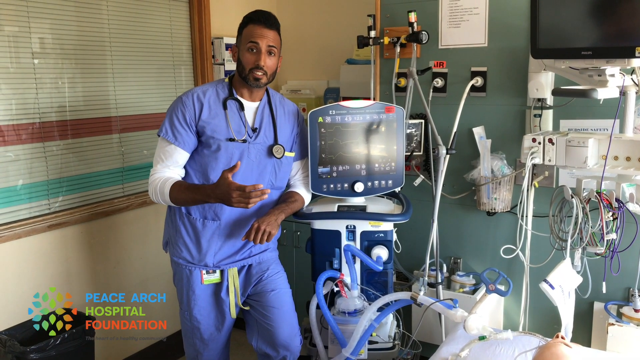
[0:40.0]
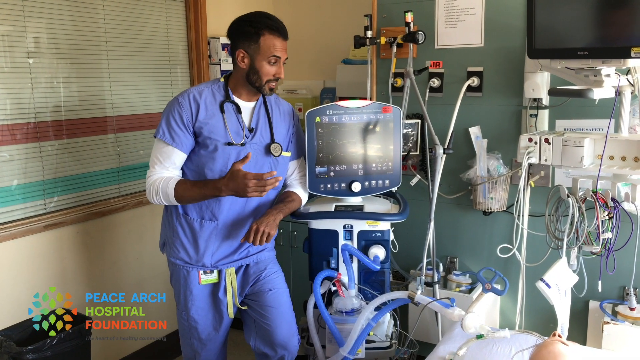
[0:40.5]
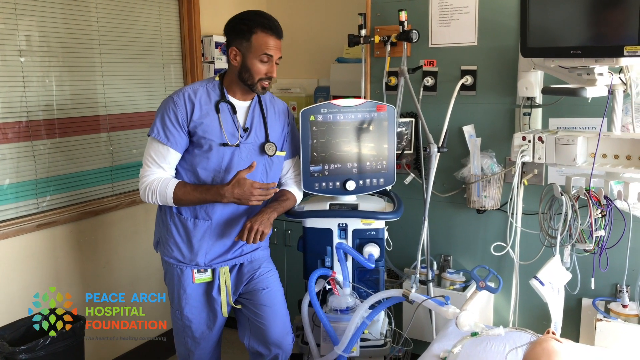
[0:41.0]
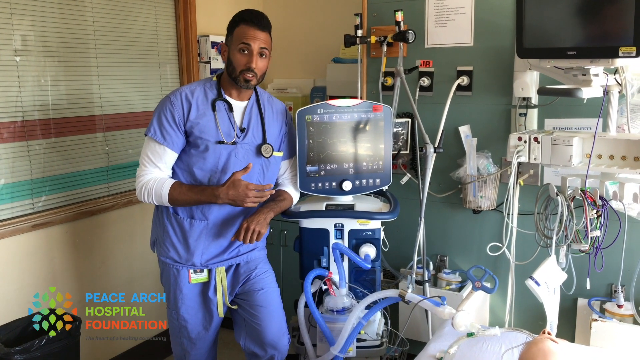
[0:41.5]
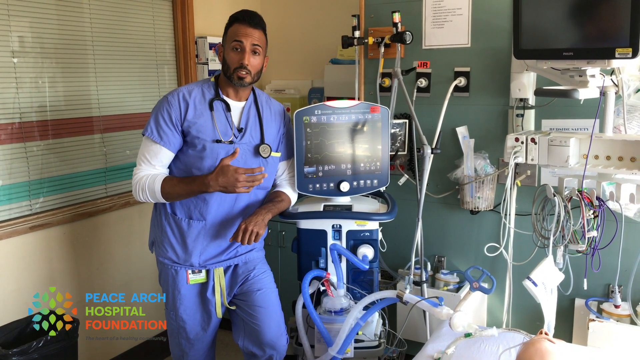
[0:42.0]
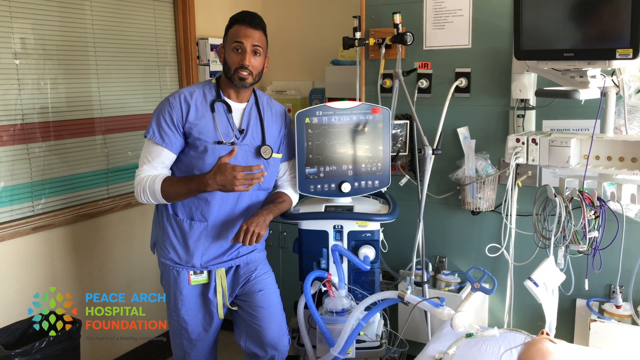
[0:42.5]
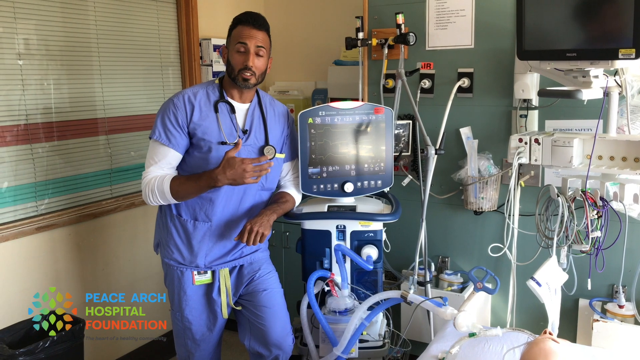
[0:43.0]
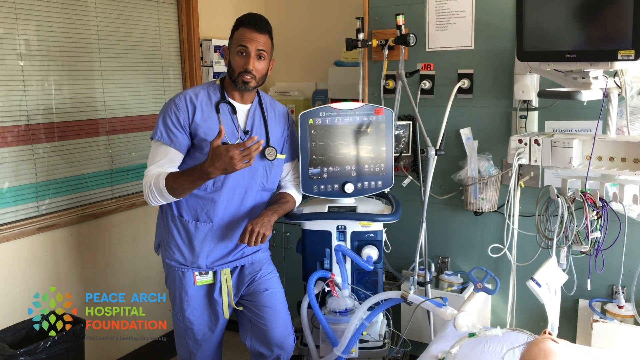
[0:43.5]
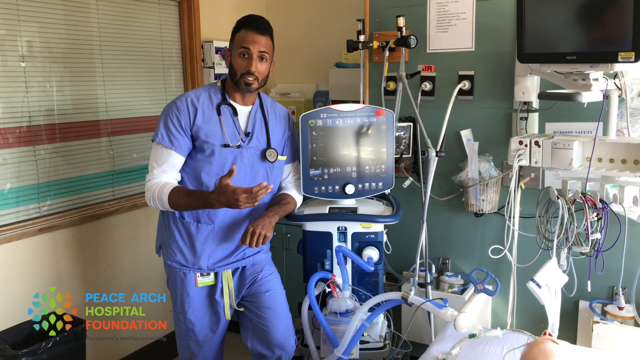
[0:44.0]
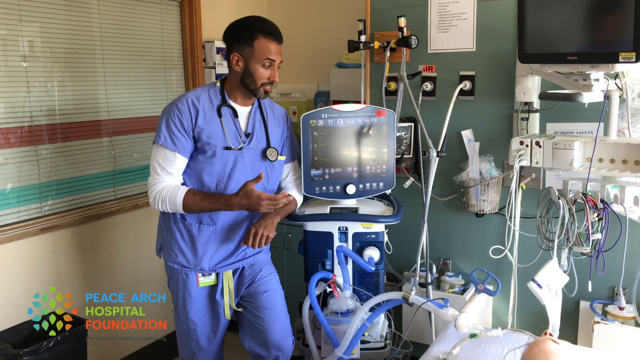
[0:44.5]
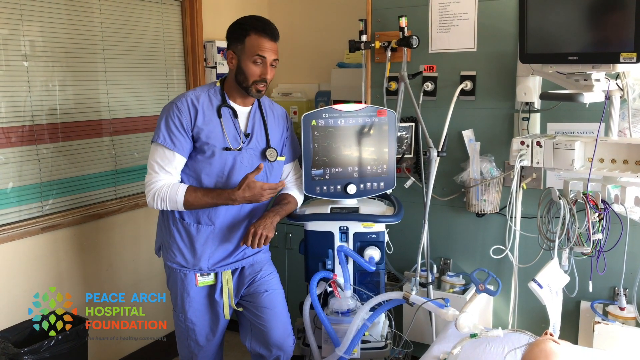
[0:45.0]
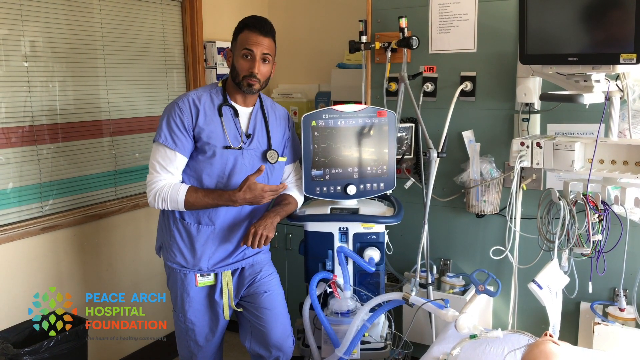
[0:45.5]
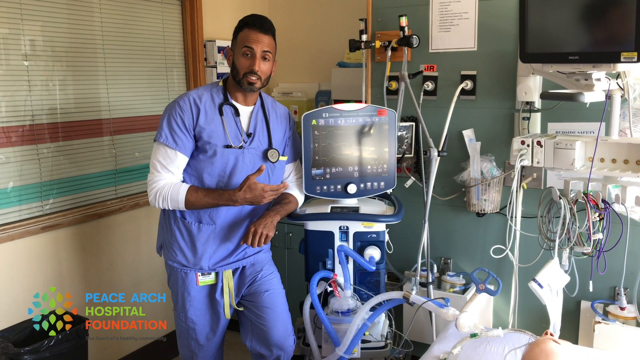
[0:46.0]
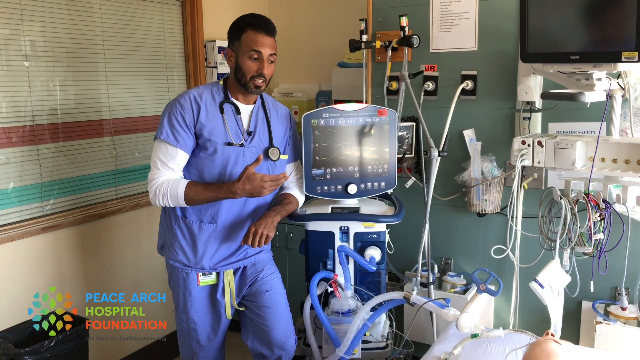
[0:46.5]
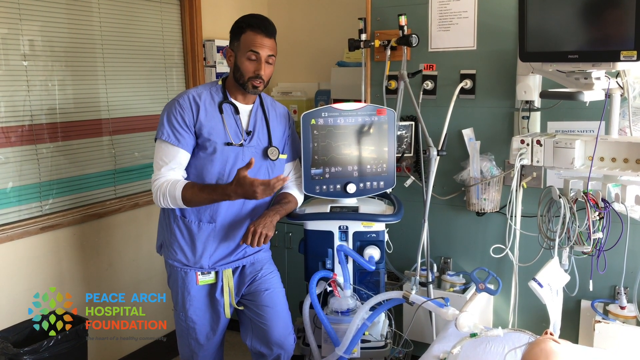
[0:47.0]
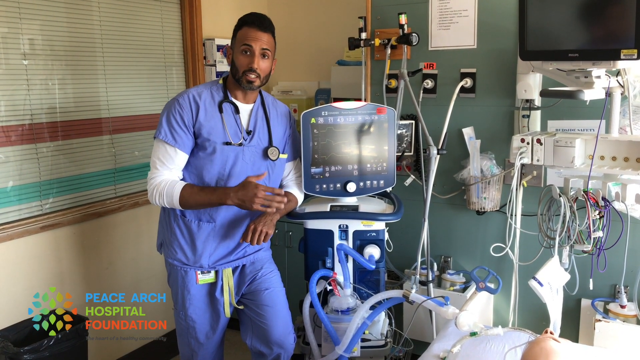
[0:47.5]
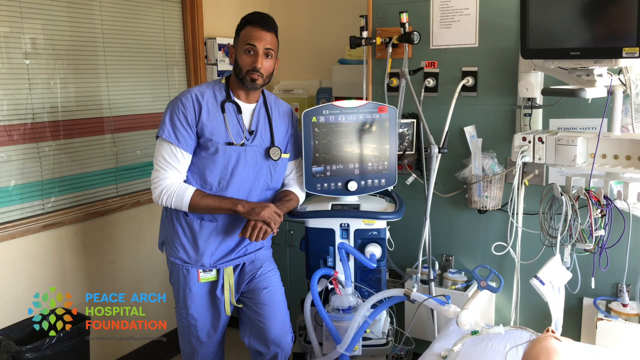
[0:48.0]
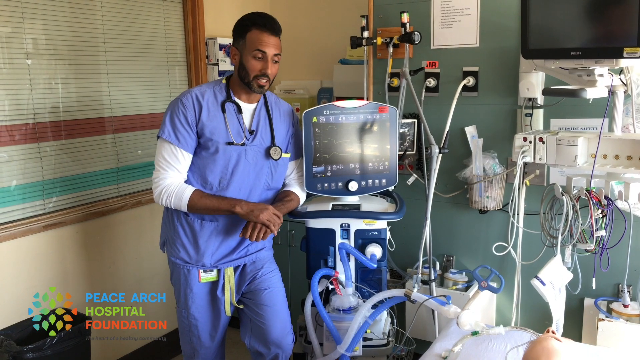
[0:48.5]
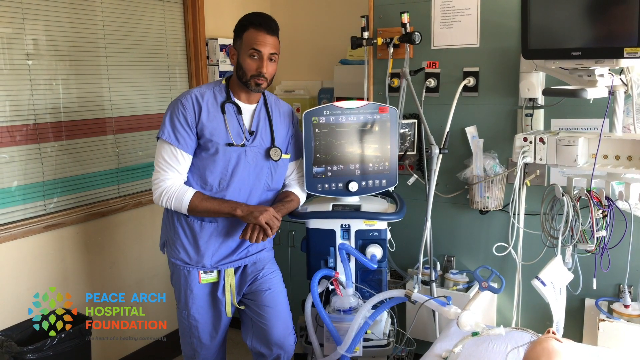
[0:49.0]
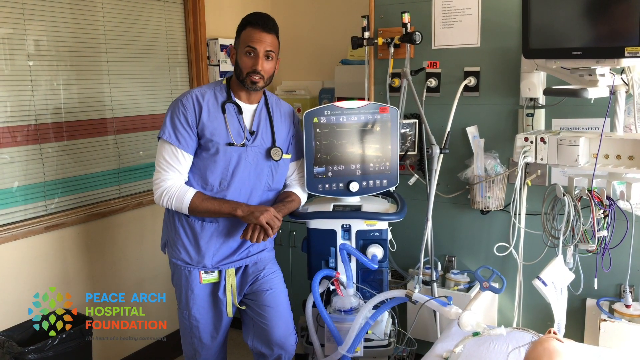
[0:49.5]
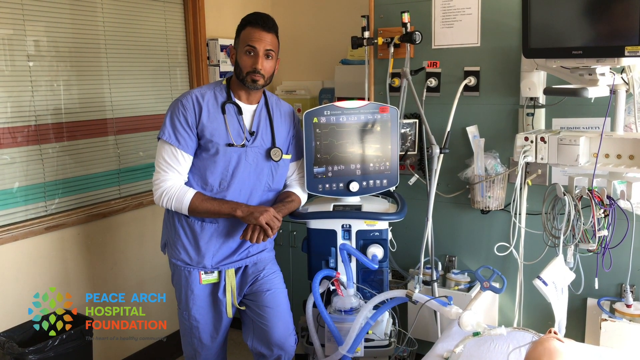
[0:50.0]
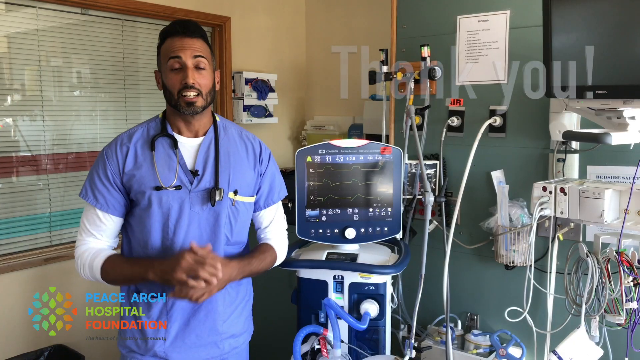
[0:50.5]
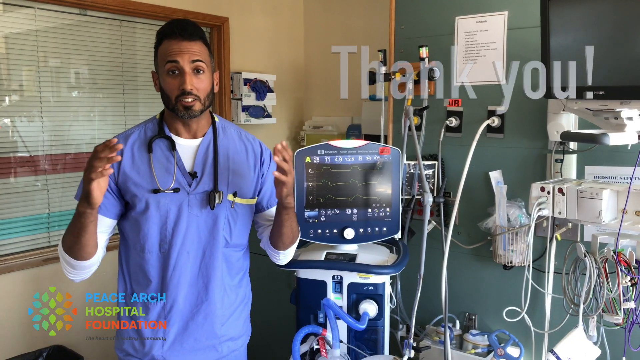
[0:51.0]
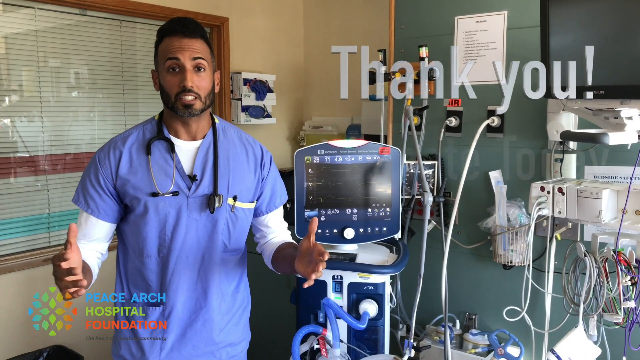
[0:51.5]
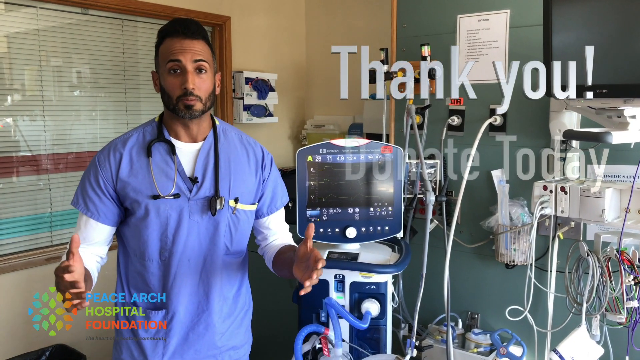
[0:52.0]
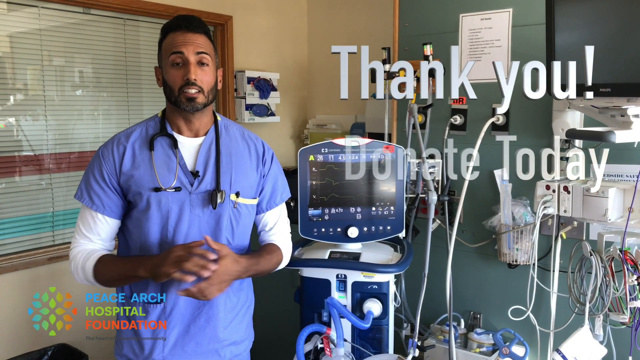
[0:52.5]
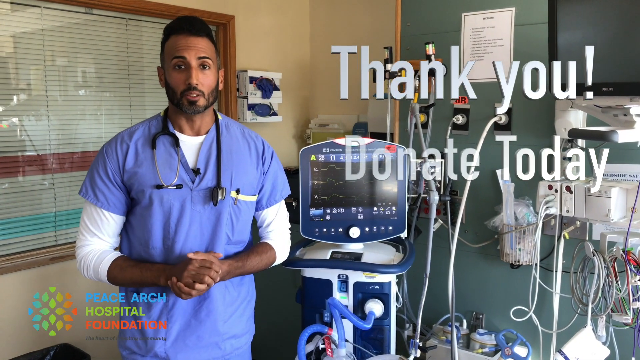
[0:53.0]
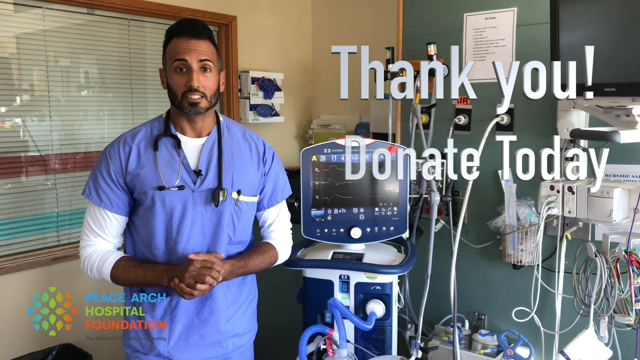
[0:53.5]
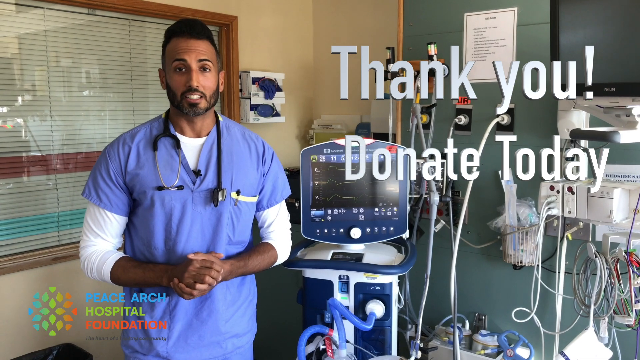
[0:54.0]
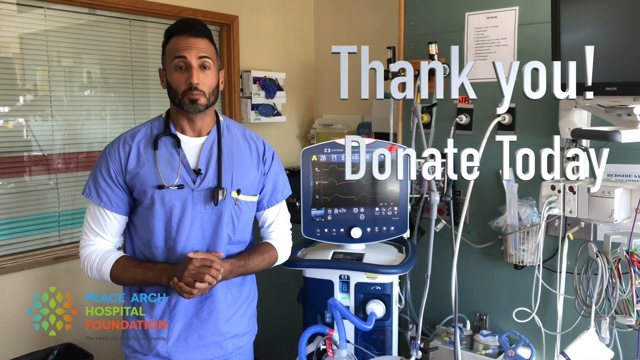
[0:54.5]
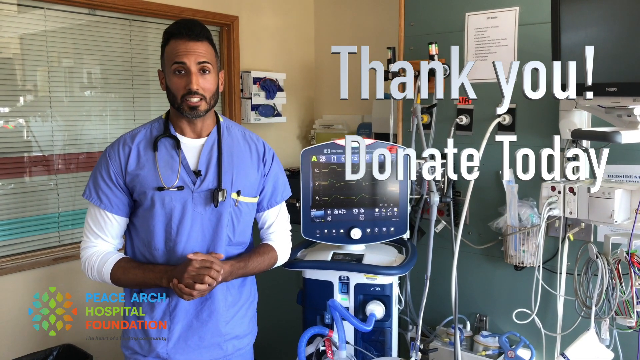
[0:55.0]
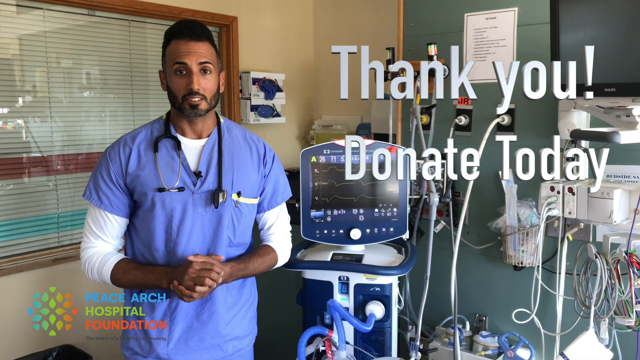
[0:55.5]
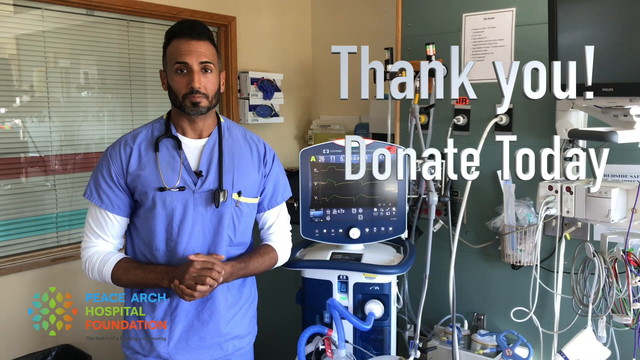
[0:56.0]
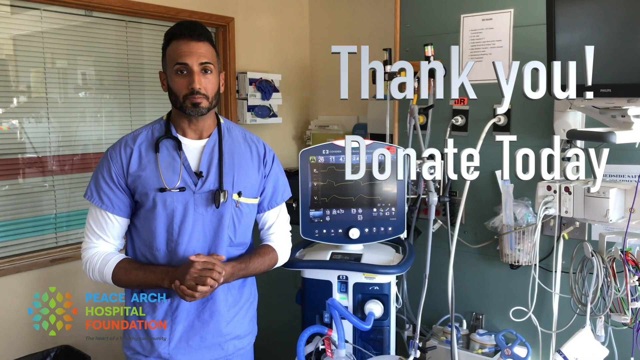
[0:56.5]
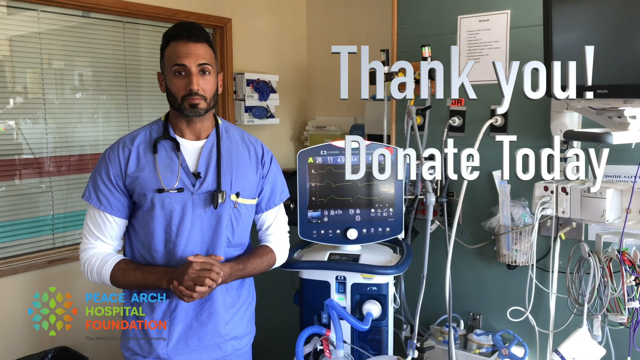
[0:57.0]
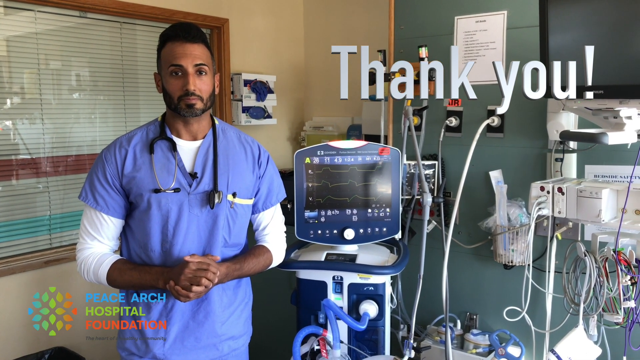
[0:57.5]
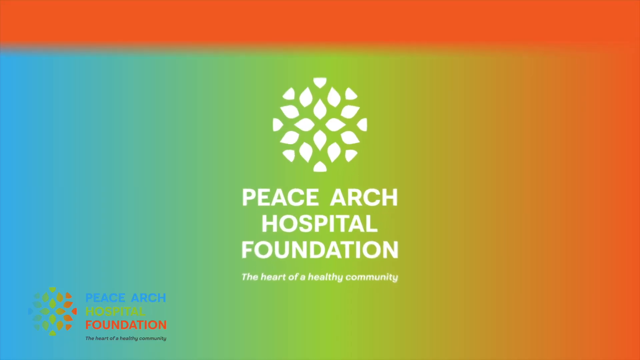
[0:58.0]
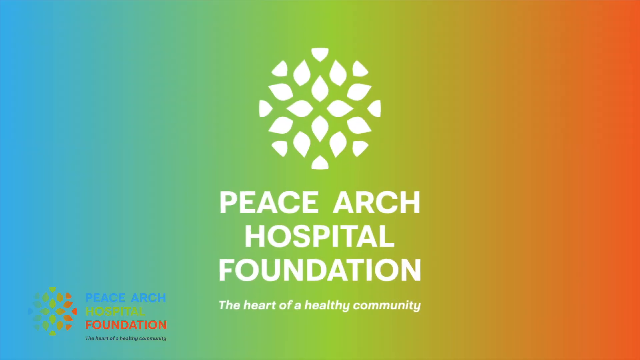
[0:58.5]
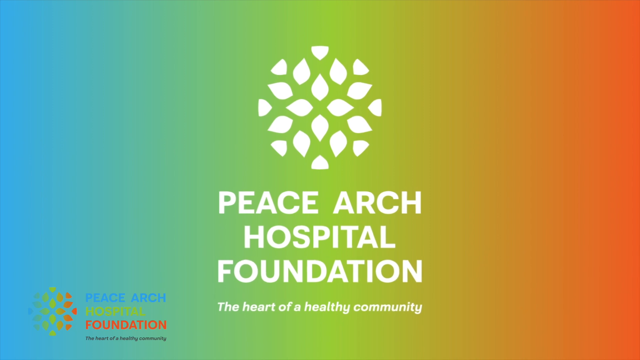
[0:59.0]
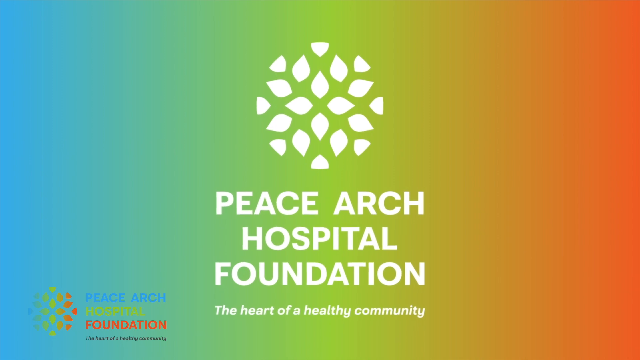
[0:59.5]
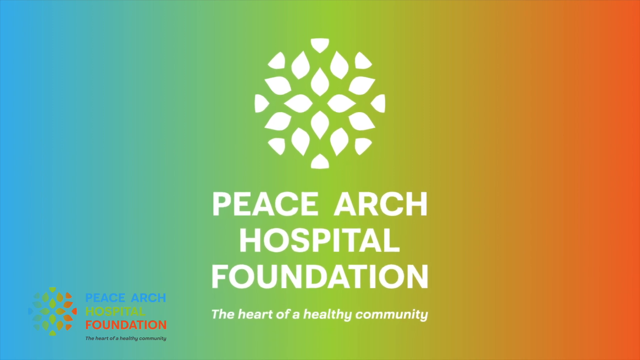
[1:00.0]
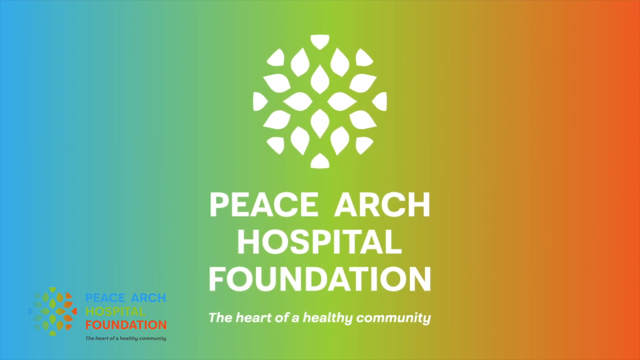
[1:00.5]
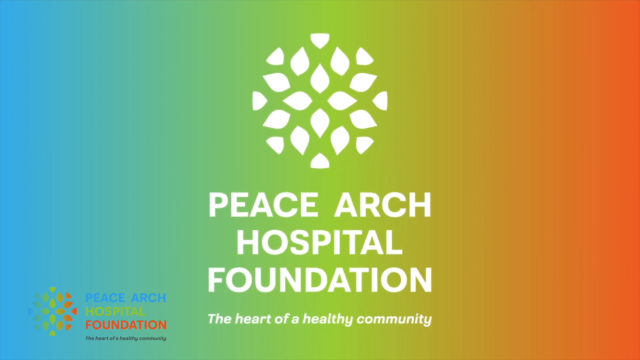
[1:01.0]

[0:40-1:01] The young South Asian doctor leans with his left elbow against the table on which a monitor rests, his left leg bent at the knee; he seems relaxed. He gestures with his right hand as he looks over at the machinery arranged against the wall to his left. He wears blue scrubs and has a stethoscope around his neck. In the lower left-hand side of the screen is the text "Peace Arch Hospital Foundation" with a logo that looks like petals next to it. The camera switches to the doctor standing on both feet in front of the monitor and machinery again. He gestures with his arms held wide, nodding his head for emphasis as he speaks directly to the camera. On the right-hand side of the screen, white text pops up reading "Thank you, donate today," with the monitors and tubes of the hospital room behind it. Then a rainbow-colored background appears with white writing on the front reading "Peace Arch Hospital Foundation, the heart of a healthy community." Those words are repeated in colors in the lower left-hand side, and above the wording in the center of the screen is a white flower petal logo.